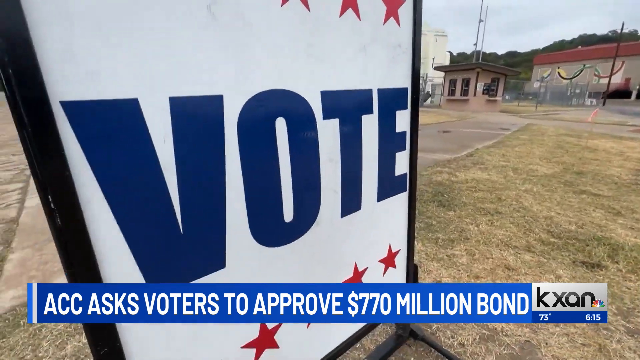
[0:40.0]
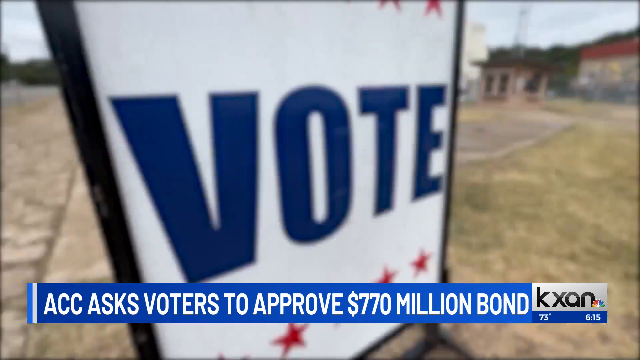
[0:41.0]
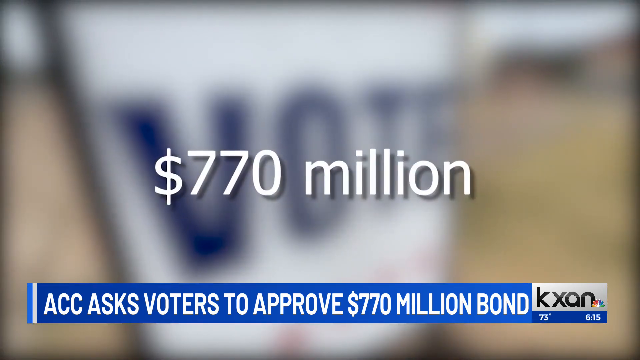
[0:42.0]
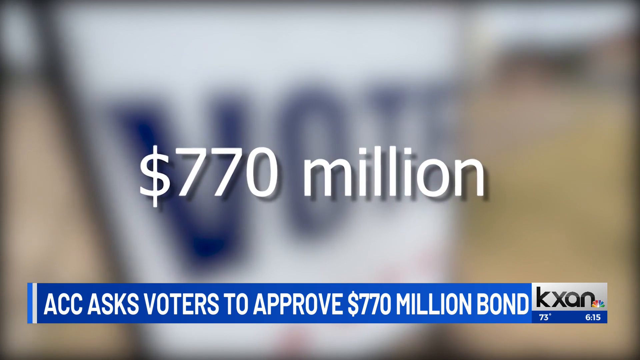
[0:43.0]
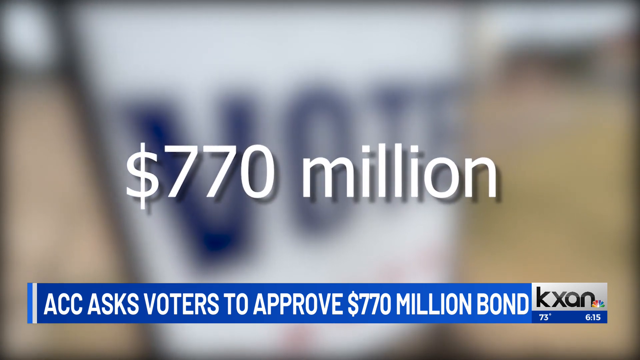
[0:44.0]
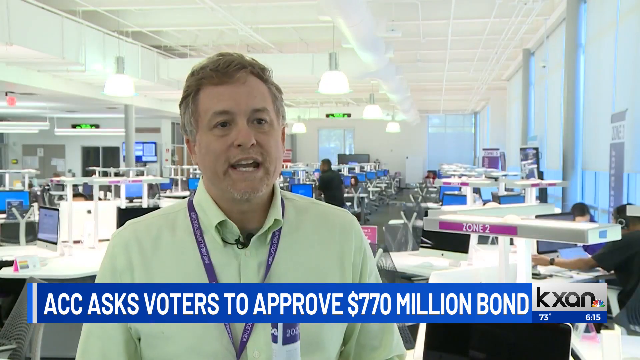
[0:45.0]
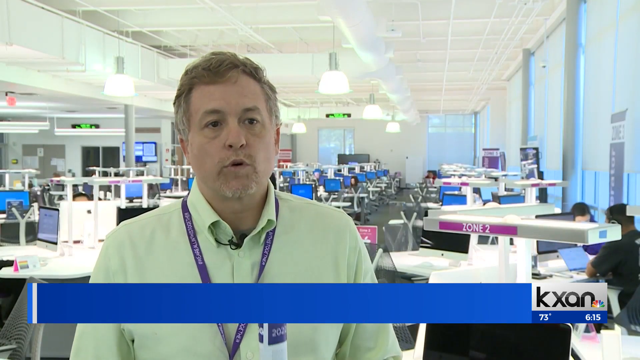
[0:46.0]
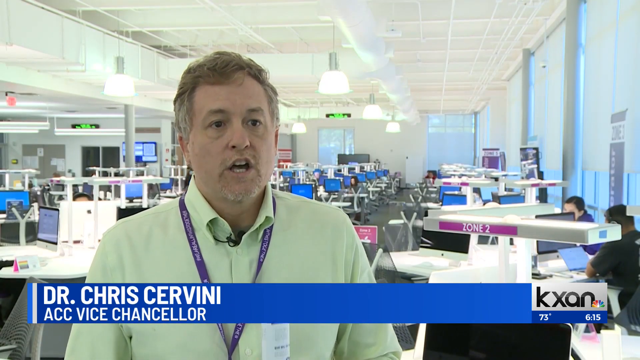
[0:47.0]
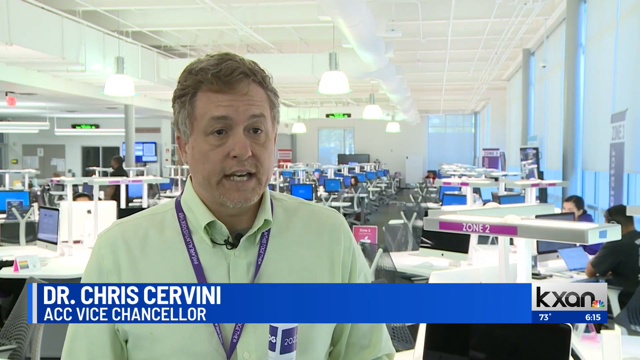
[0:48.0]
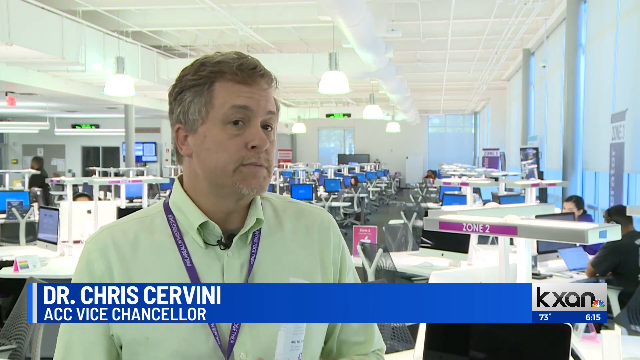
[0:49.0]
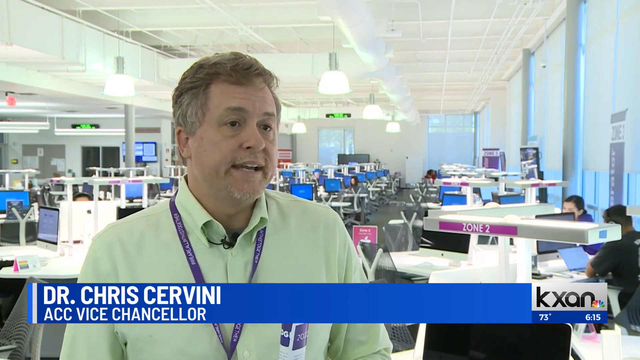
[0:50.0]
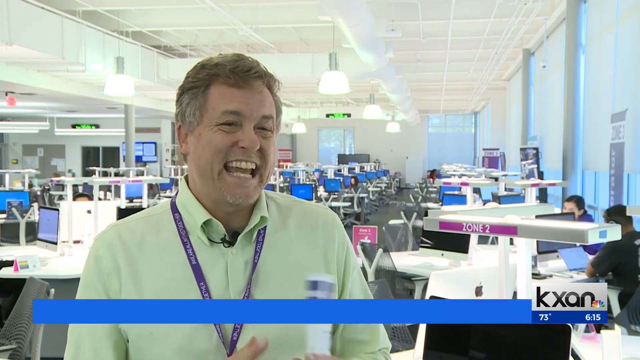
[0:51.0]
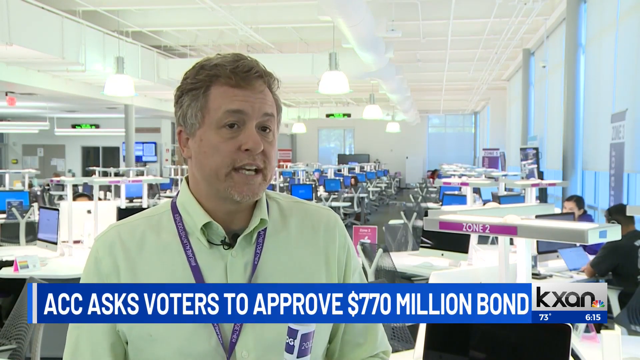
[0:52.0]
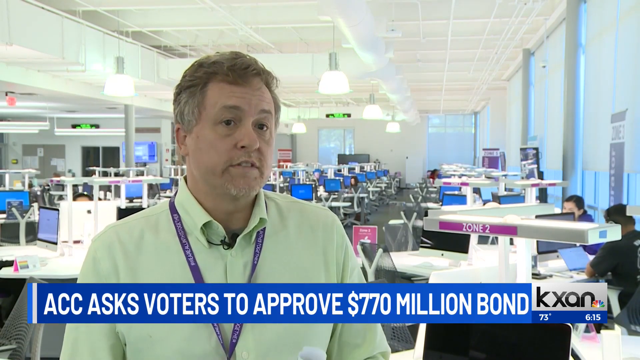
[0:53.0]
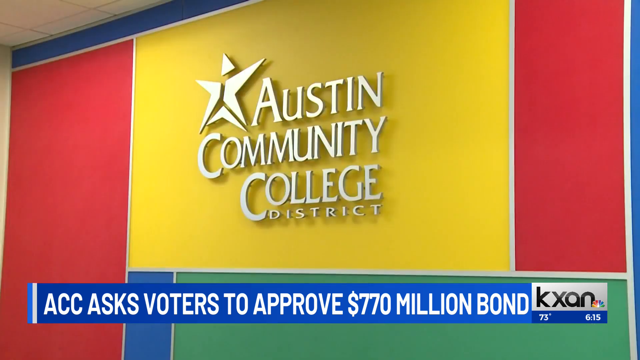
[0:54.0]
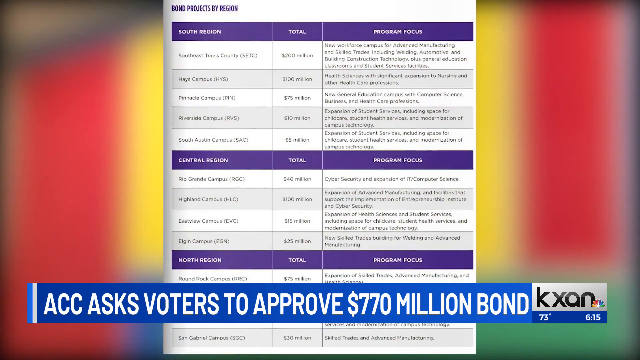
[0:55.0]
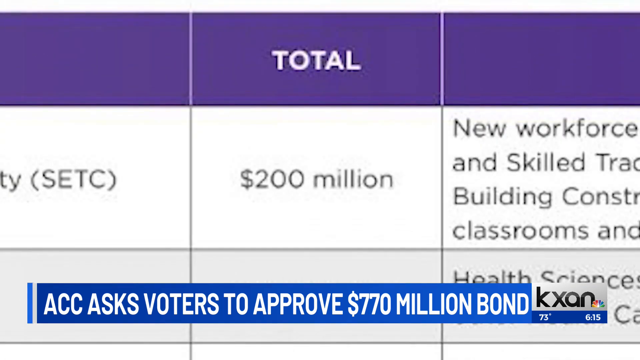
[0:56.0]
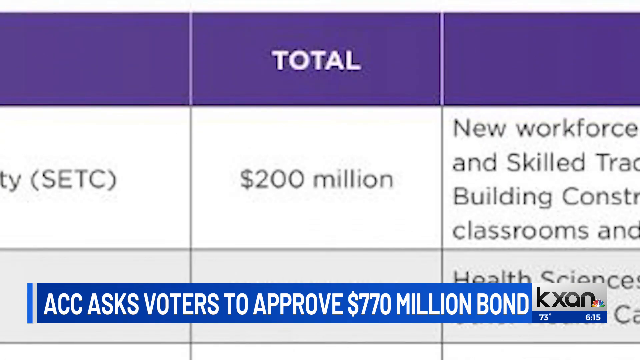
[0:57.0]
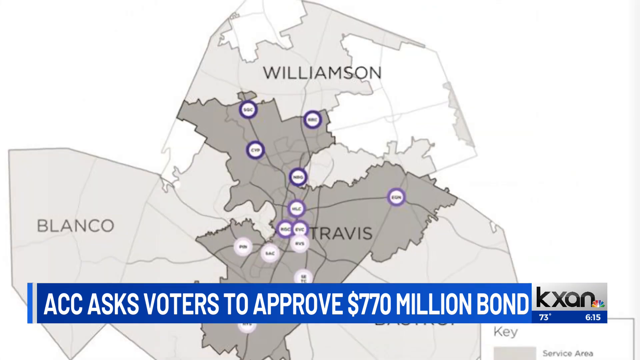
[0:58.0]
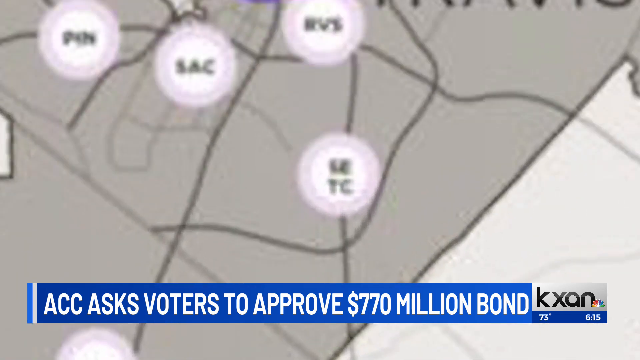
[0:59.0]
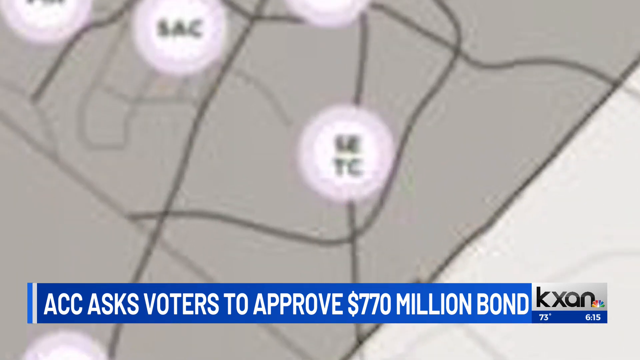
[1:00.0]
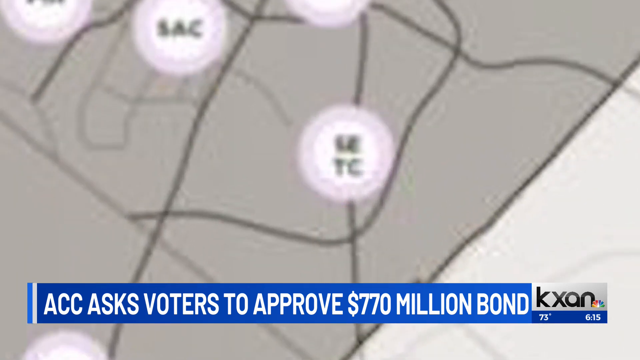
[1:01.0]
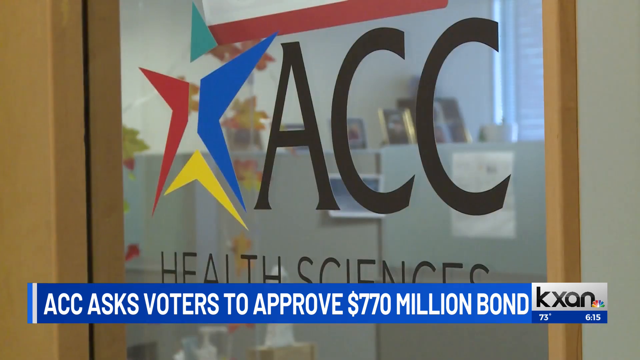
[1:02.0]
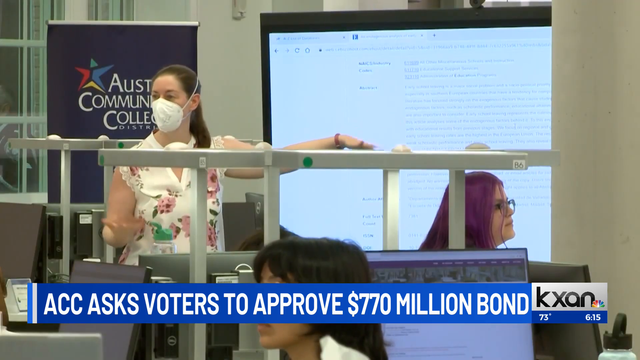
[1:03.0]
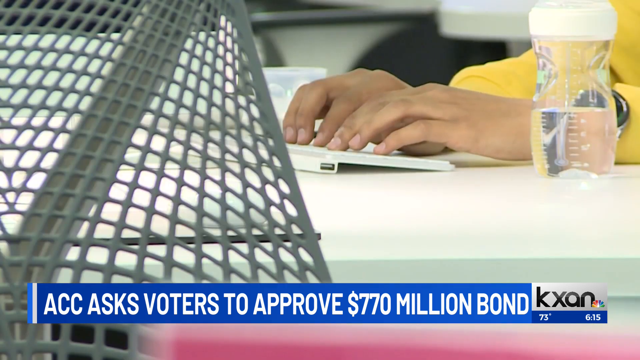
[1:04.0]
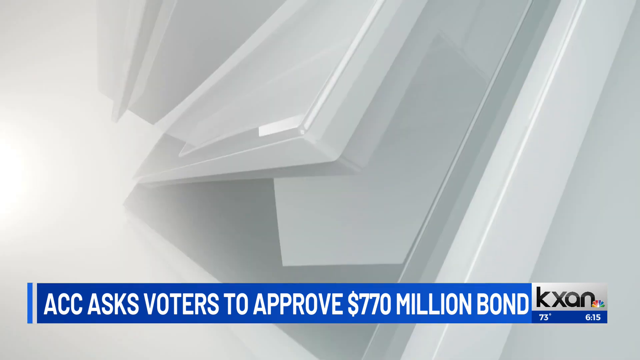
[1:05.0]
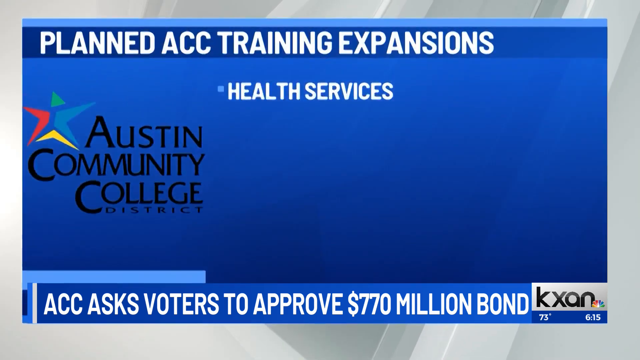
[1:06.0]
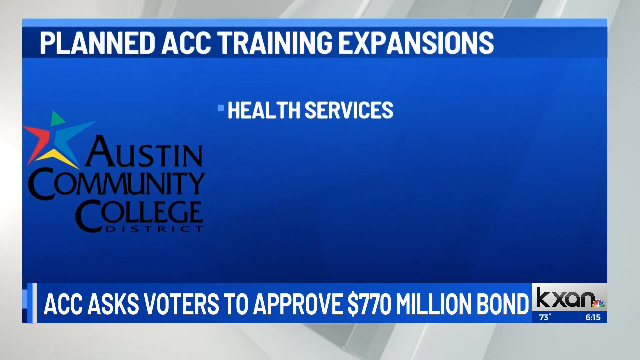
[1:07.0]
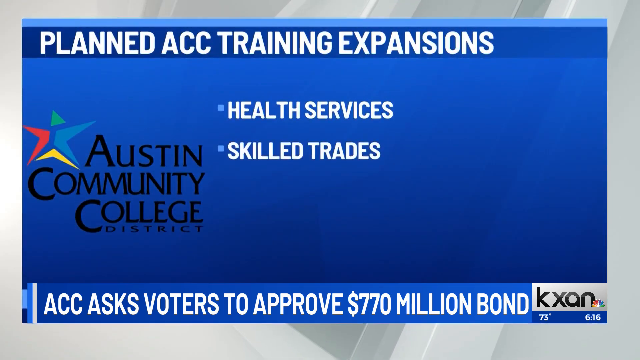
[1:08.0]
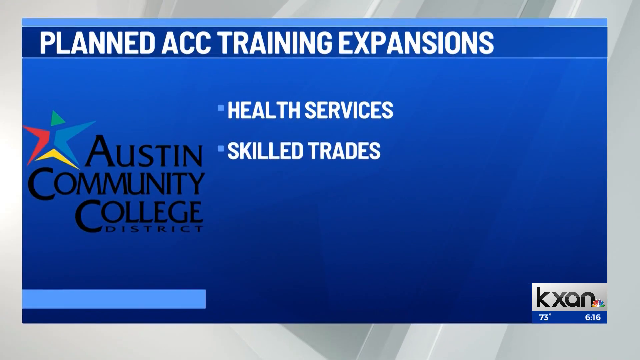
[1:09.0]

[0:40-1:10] The newscast shows the words "770 million," and on the splash screen beneath, the text reads "ACC ask voters to approve a $770 million dollar bond." To the right are the call letters KXAN with the NBC peacock symbol next to them, the temperature of 73, and the time 6:15. The video moves to a large office building that is very well lit with white aesthetics. The wall is painted light, a lot of light hangs down from the ceiling, and there are huge windows to look outside, with some shades up and some down. All the tables and computers are white. A man who looks to work in the office building is on camera, wearing a lanyard with an ID badge around his neck and talking to the camera. The splash sticker beneath him reads "Dr. Chris Servini, ACC Vice Chancellor." Next, Austin Community College District appears on a wall, then a spreadsheet pops up and focuses on one line, a total line that says "200 million." The next screen is a map that appears to highlight the areas of Williamson and Travis, with some stickers in purple and light purple on it; it zooms into one area at the bottom. The next screen shows Austin Community College District, where a woman wearing a mask and a dress with flowers on it talks in front of a large screen, her hands motioning as she speaks to people in front of her. Different scenes follow: someone's hands typing at a typewriter, then a presentation splash screen from Austin Community College District reading "planned ACC training expansions," with bullets for "health services," "skilled trades" and "cybersecurity."